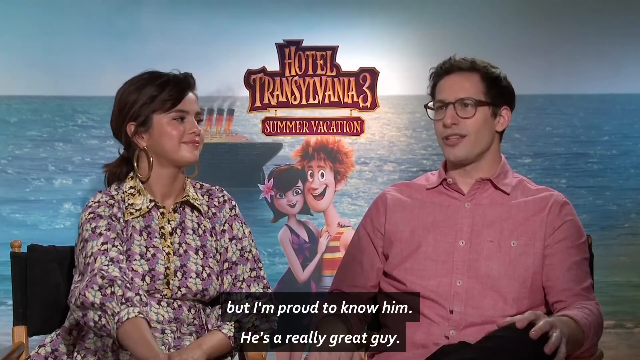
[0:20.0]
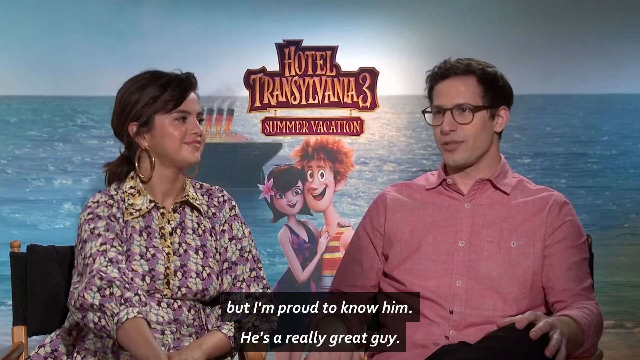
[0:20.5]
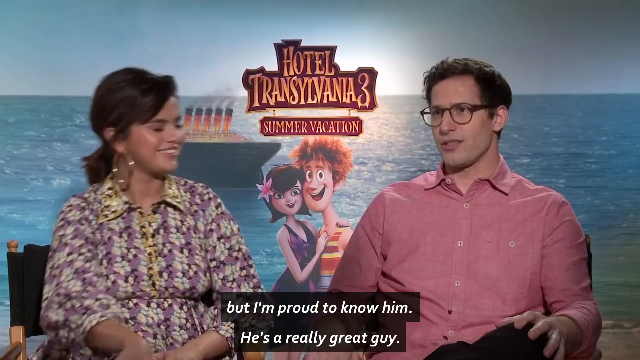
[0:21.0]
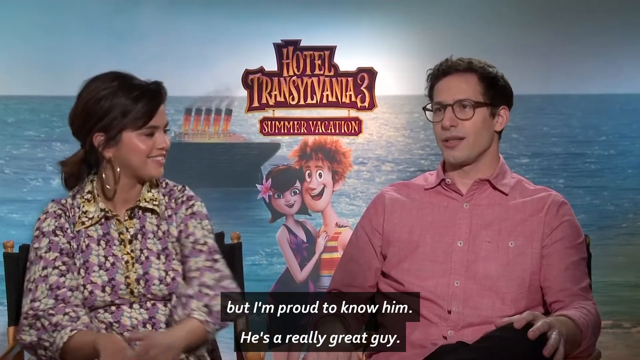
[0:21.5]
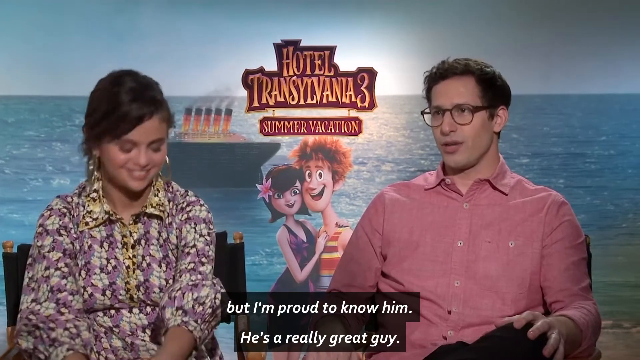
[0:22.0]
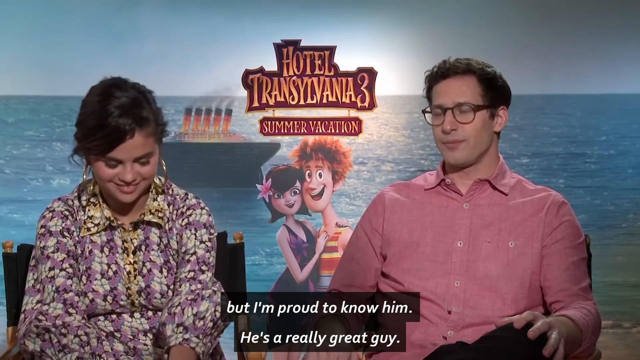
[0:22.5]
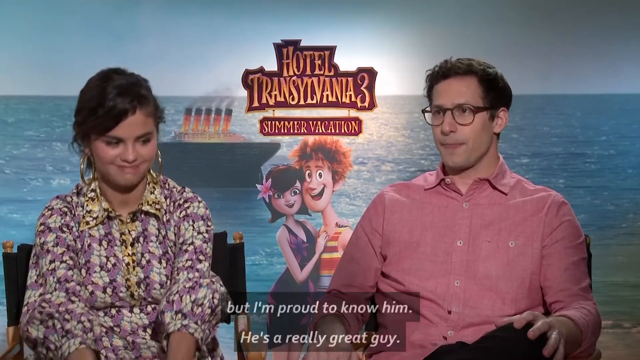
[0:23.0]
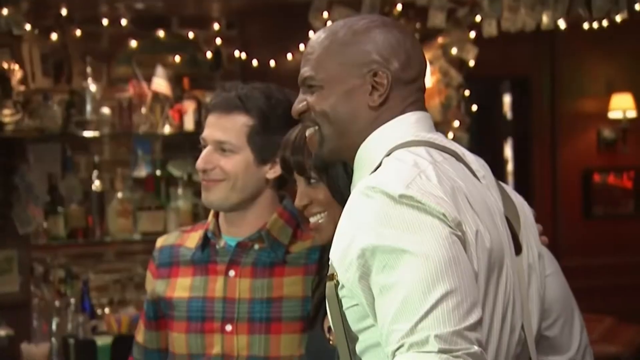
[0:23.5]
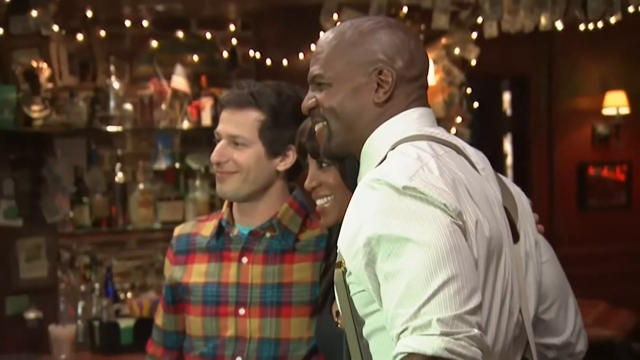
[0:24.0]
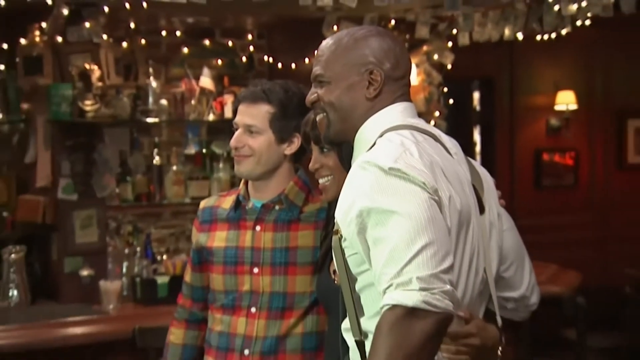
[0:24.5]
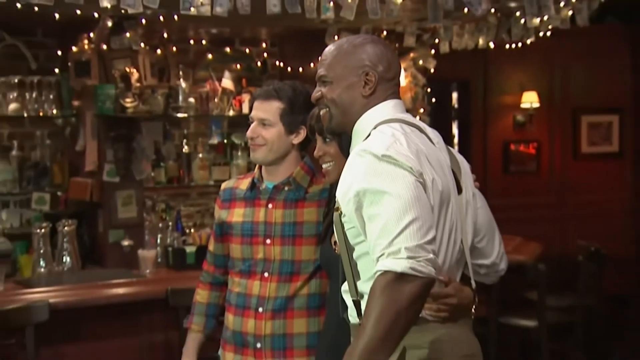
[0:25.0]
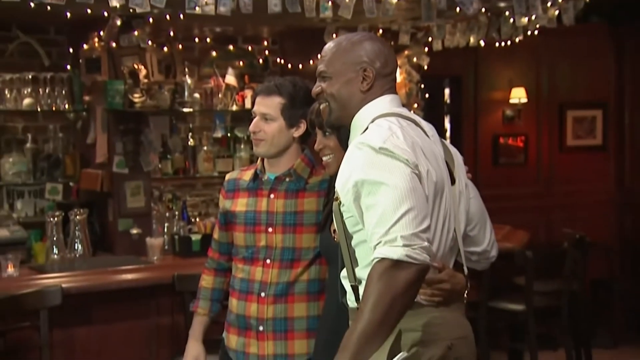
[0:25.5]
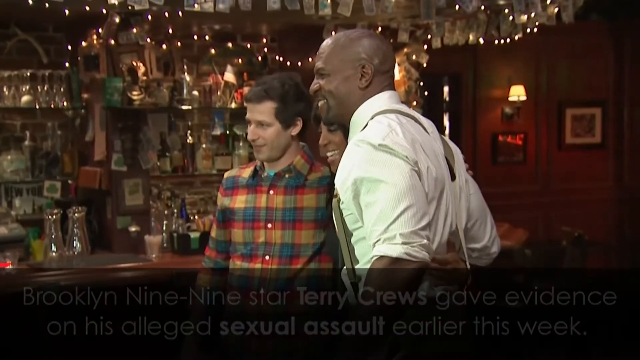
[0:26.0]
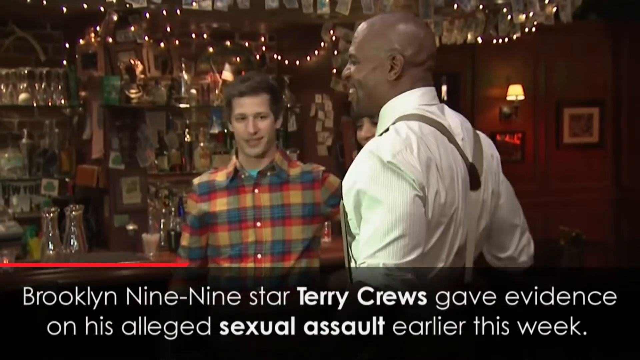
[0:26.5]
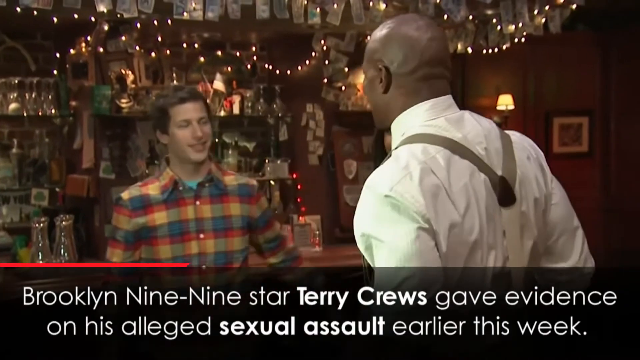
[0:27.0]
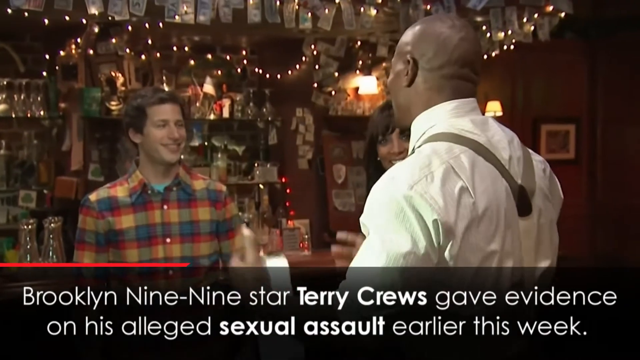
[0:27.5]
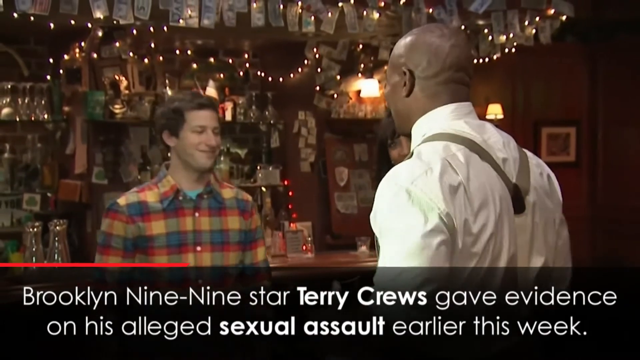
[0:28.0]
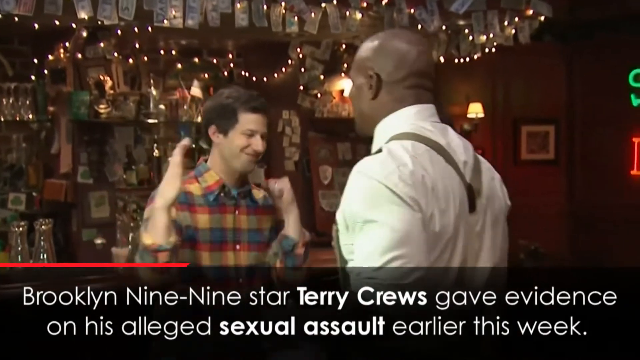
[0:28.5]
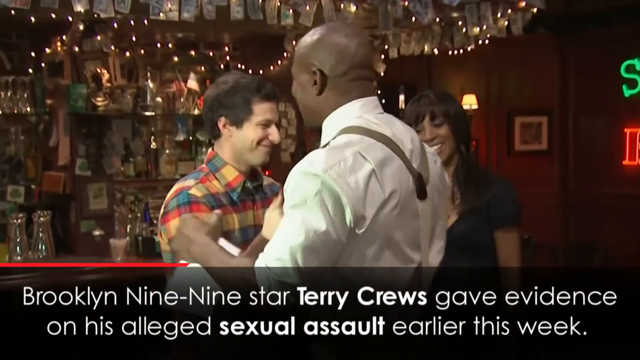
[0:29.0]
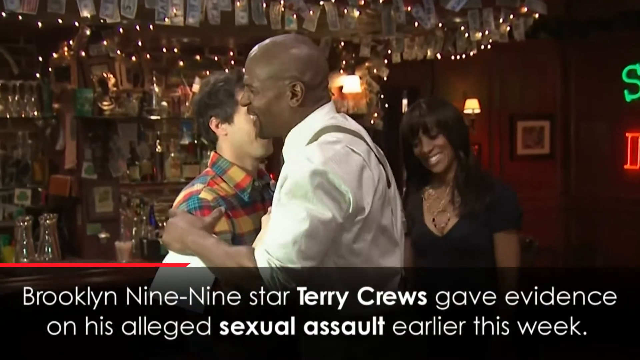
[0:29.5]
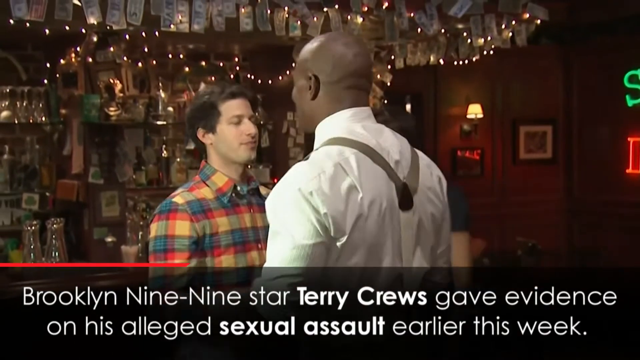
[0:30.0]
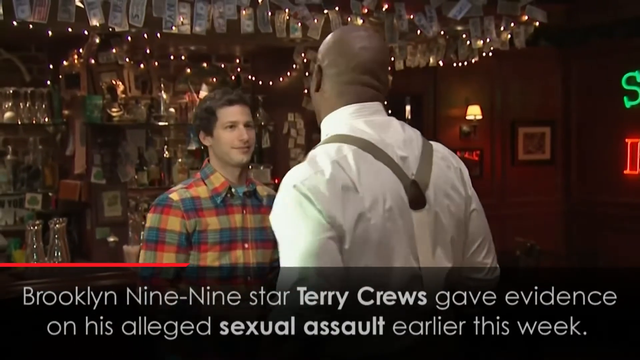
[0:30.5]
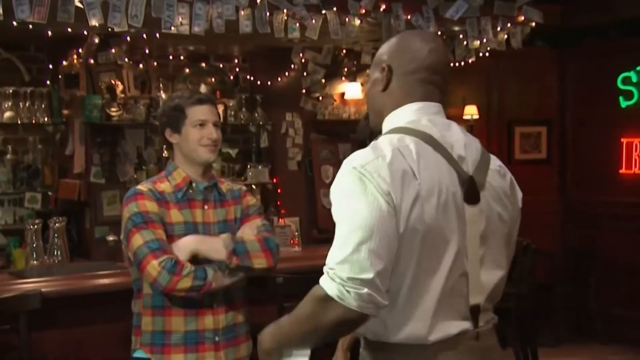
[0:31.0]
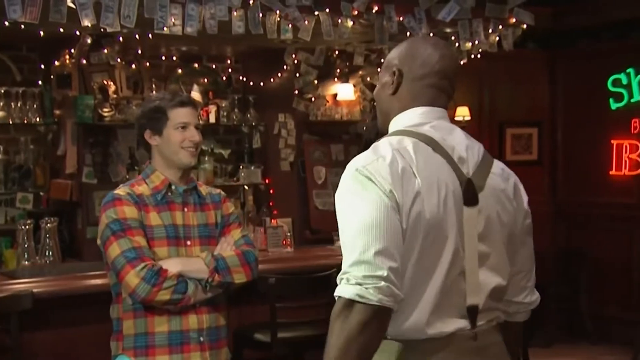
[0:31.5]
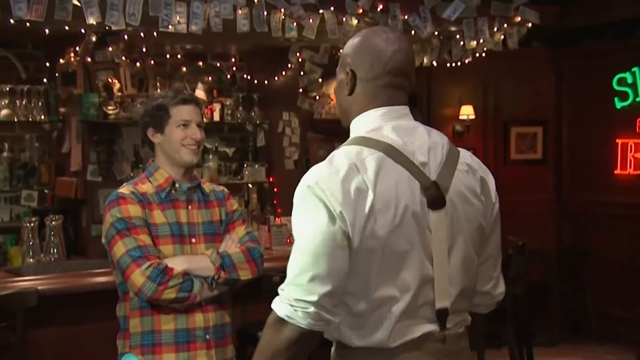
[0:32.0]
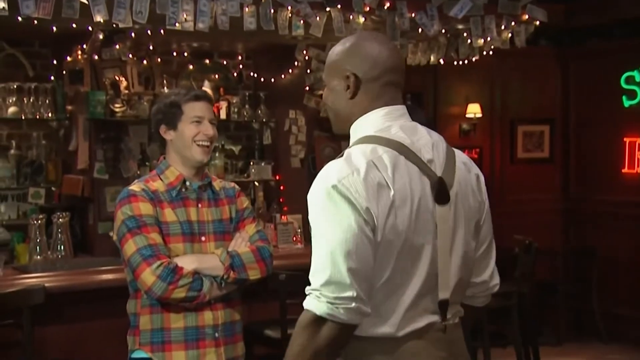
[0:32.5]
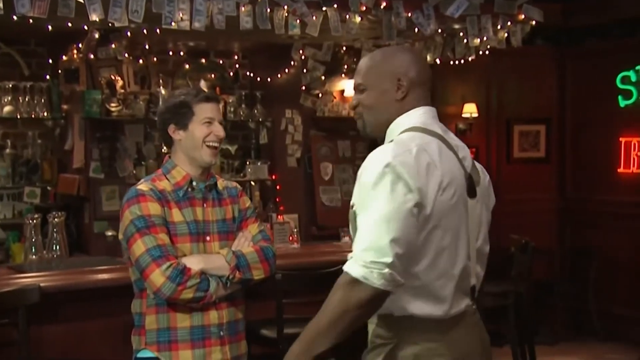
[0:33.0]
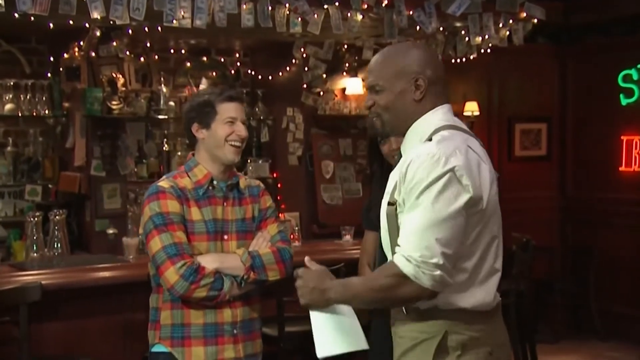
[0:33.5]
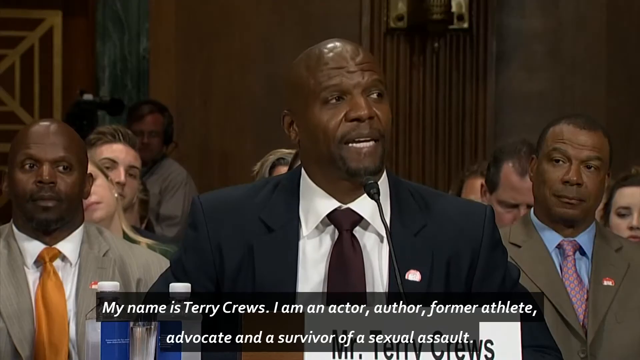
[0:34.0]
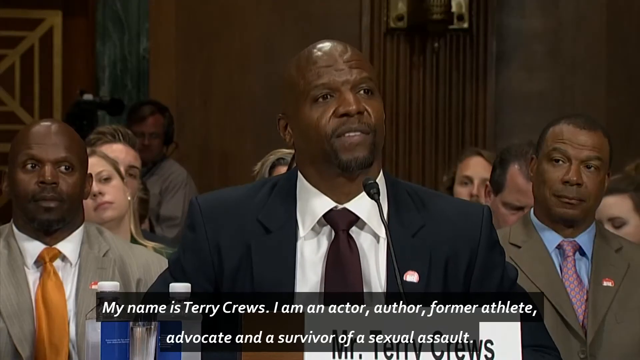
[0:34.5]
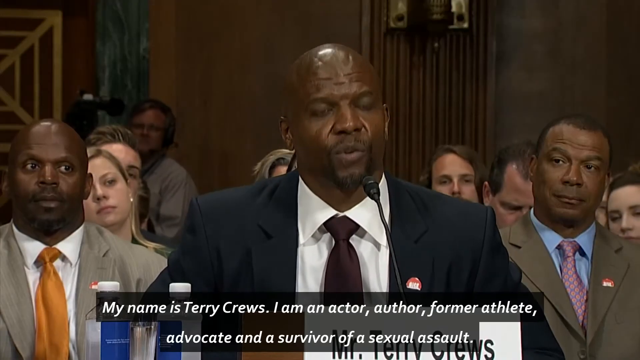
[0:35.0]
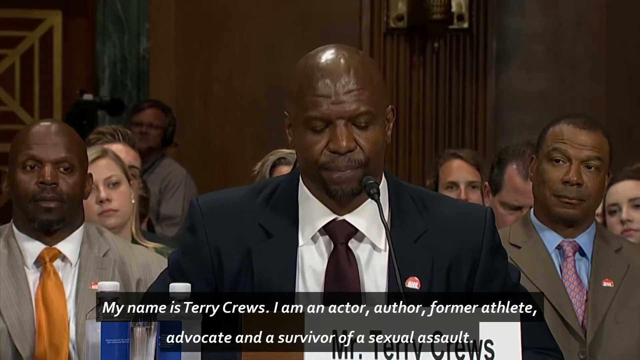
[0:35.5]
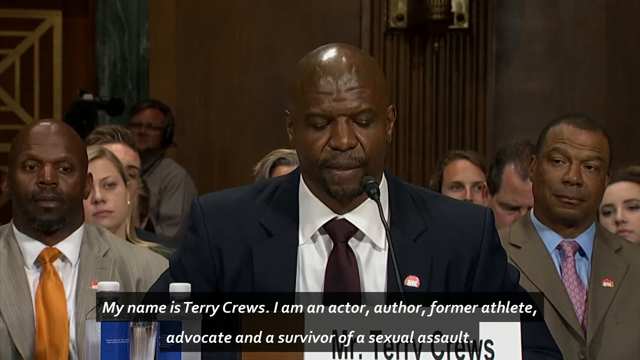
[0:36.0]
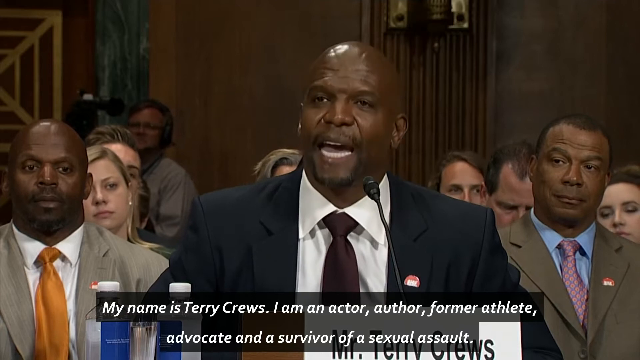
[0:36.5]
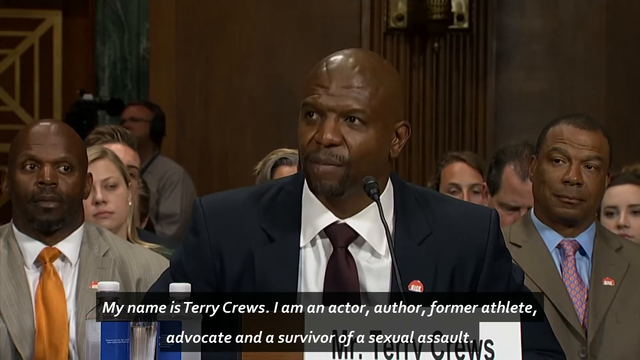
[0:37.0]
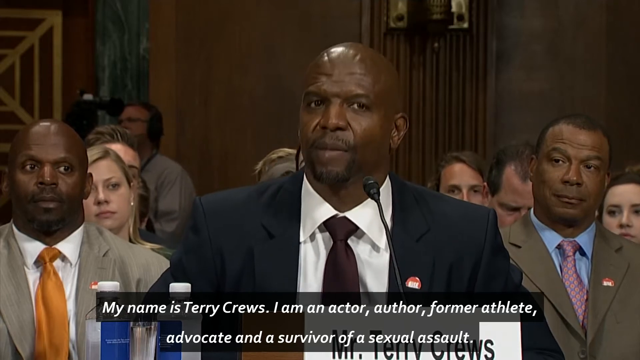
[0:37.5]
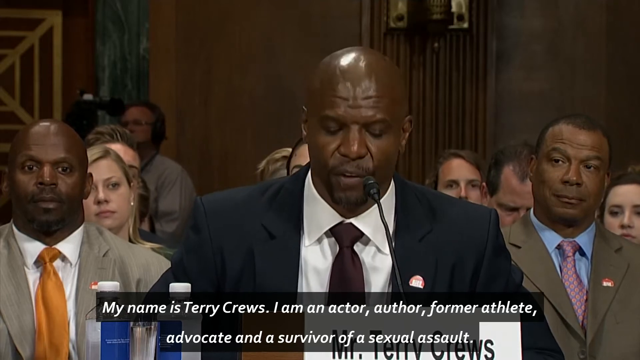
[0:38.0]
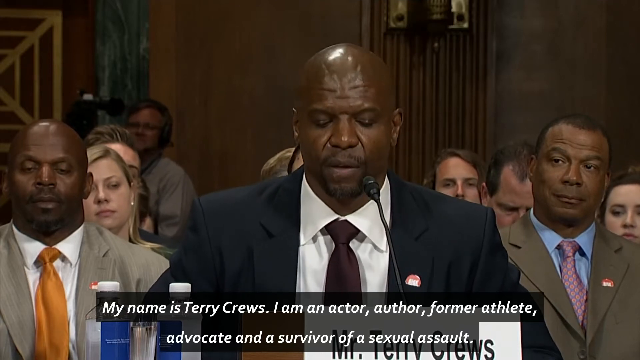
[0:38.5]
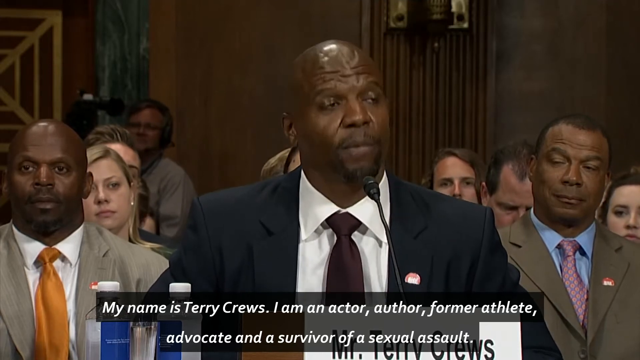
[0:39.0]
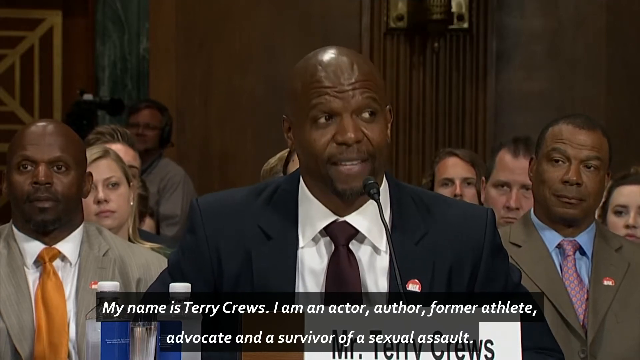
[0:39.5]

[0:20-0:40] The man on the right appears to be talking while the woman on the left laughs. The scene transitions to a bald Black man, Terry Crews, shaking hands with a white man in a plaid shirt; Terry Crews wears a white shirt with suspenders. Terry Crews then speaks, saying "I am an actor, author, formerly athlete, advocate and survivor of sexual assault." He appears to be wearing a black blazer with a very dark burgundy tie over a white dress shirt, and he talks in front of a small mic. A Black woman with shoulder-length straight hair is between Terry and the white man. The white man and Terry shake hands and start laughing. Terry then speaks at a podium. Behind him are two Black men, and behind them are some white people. A cameraman is in the left corner.